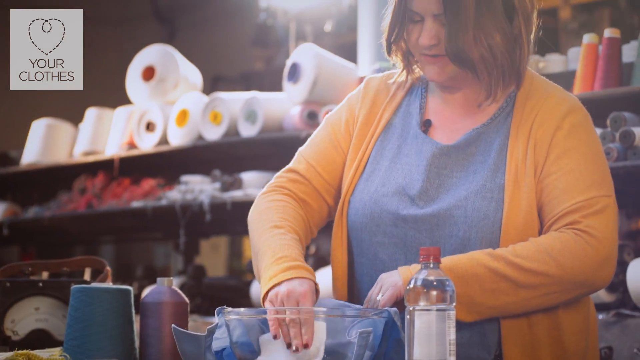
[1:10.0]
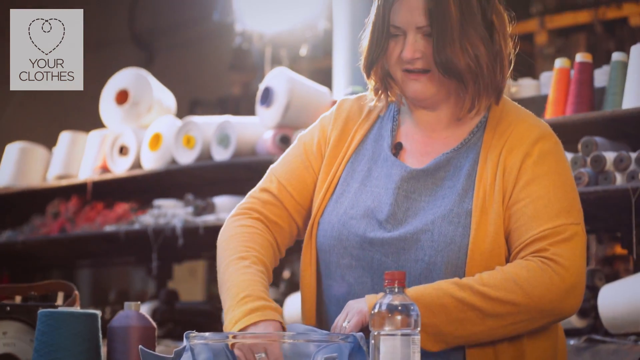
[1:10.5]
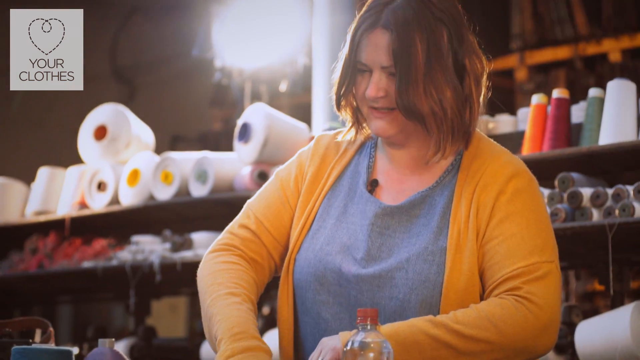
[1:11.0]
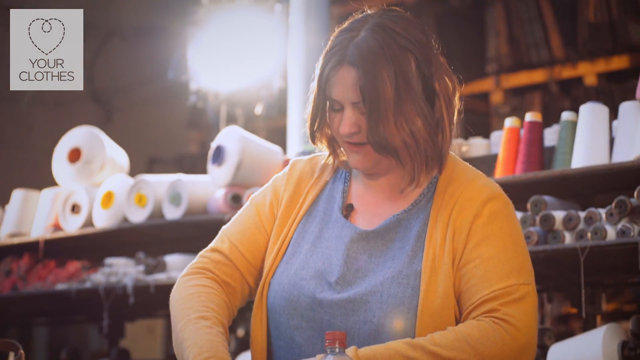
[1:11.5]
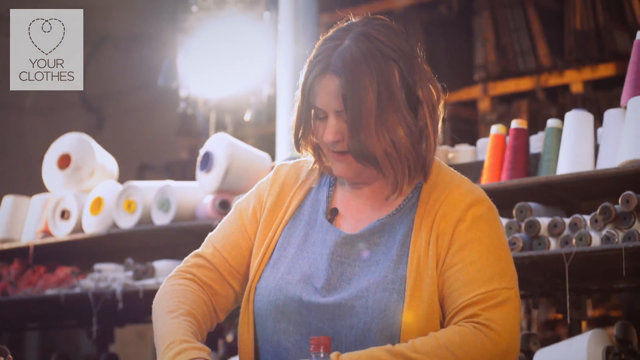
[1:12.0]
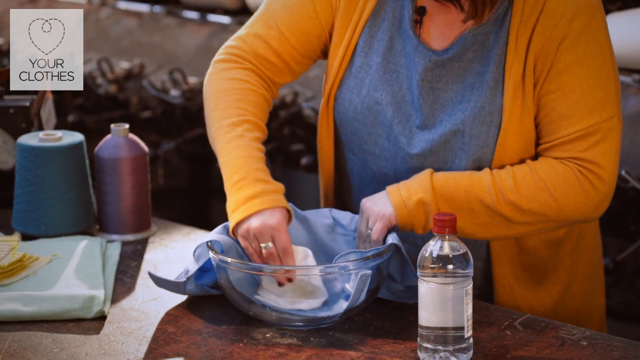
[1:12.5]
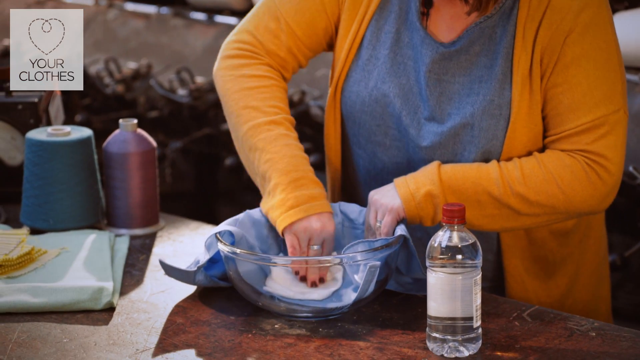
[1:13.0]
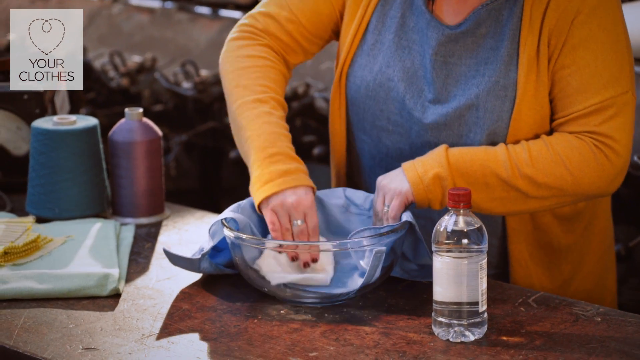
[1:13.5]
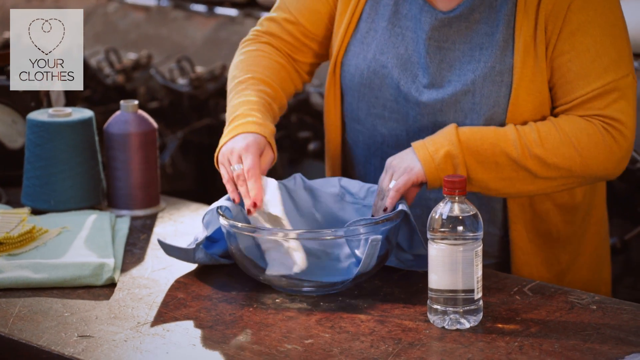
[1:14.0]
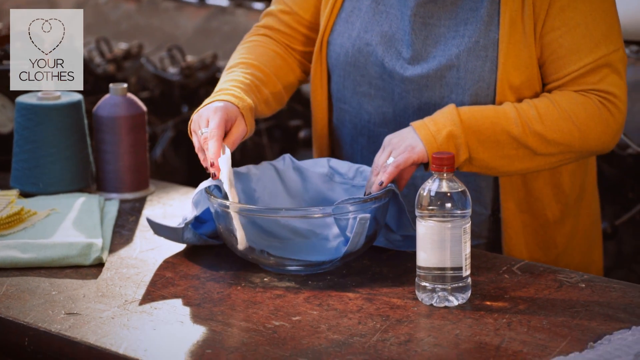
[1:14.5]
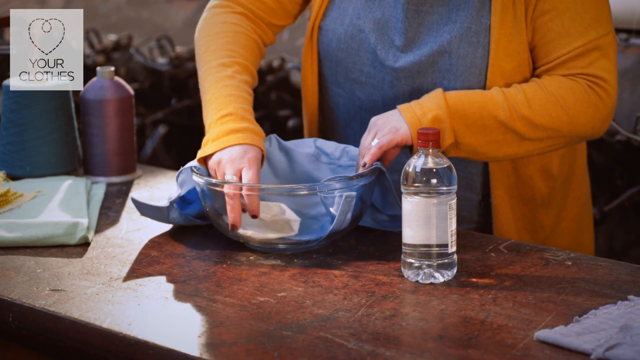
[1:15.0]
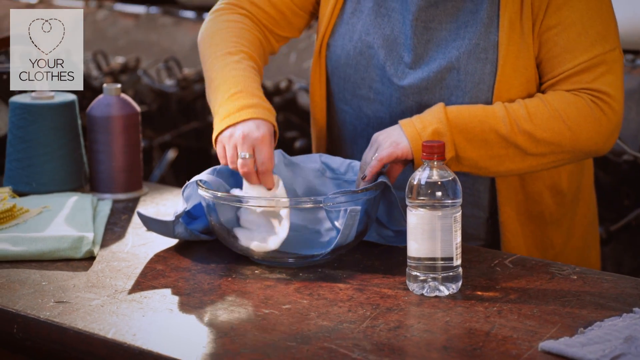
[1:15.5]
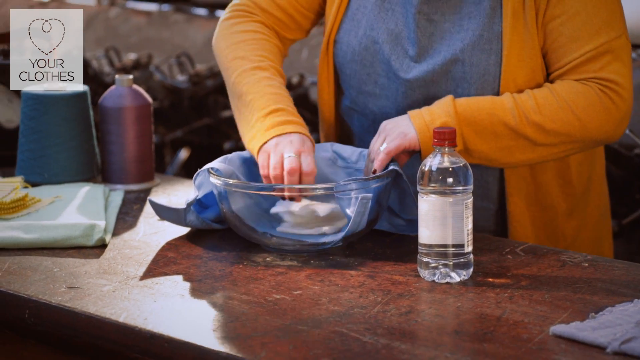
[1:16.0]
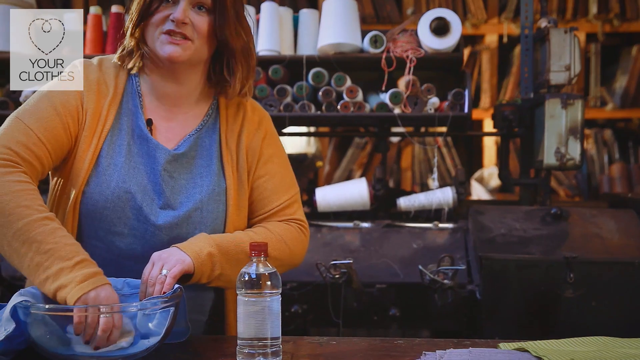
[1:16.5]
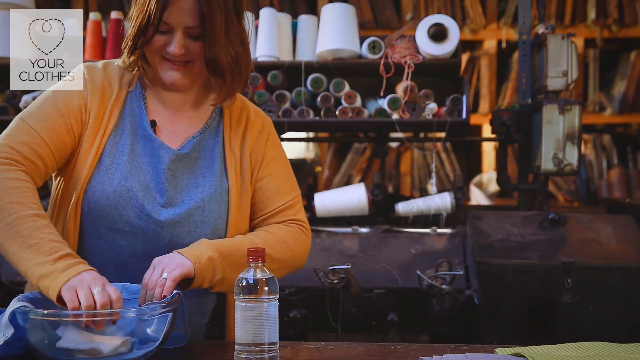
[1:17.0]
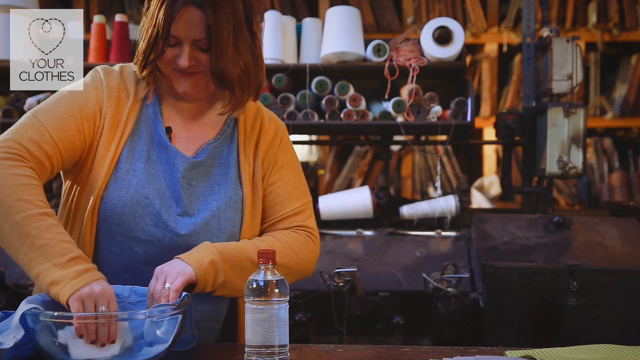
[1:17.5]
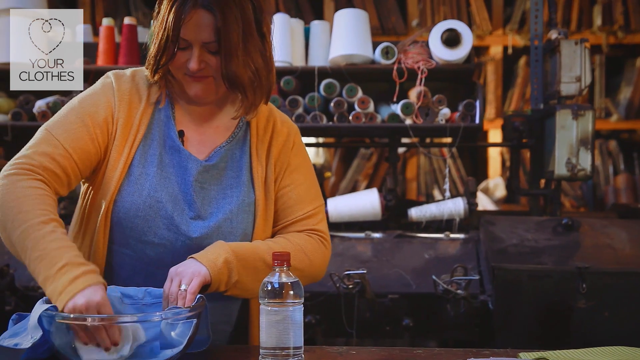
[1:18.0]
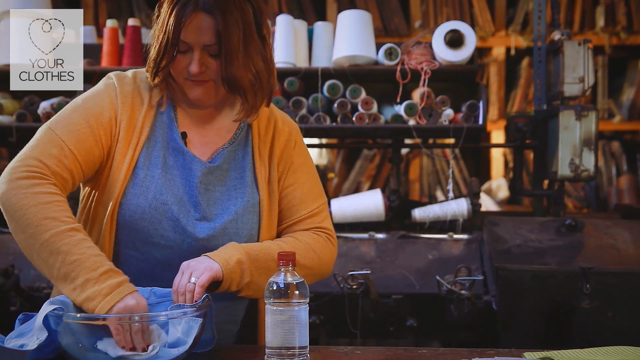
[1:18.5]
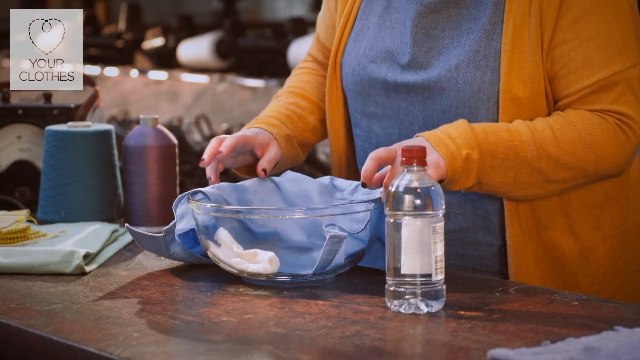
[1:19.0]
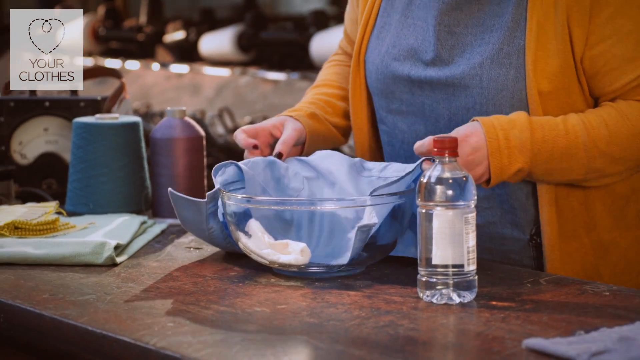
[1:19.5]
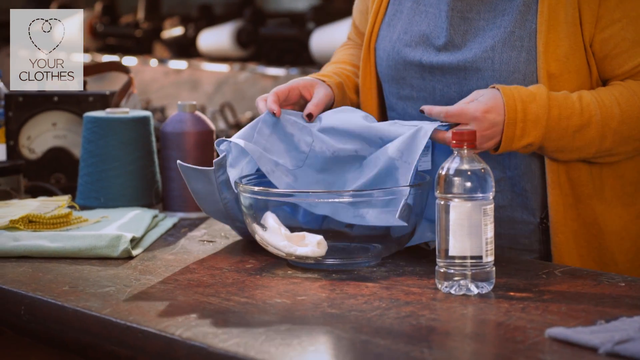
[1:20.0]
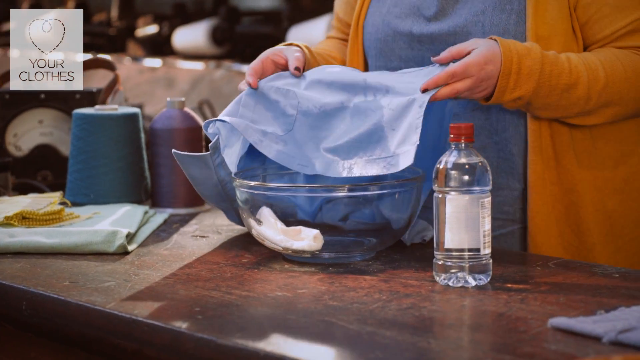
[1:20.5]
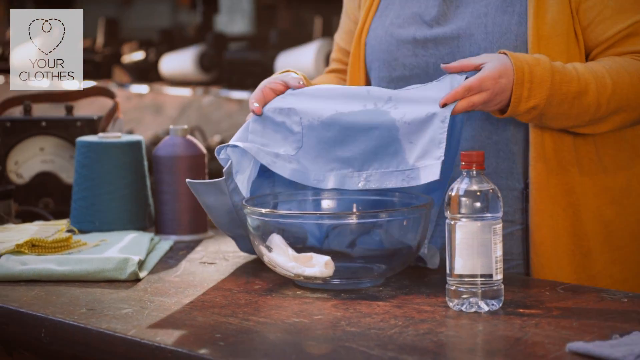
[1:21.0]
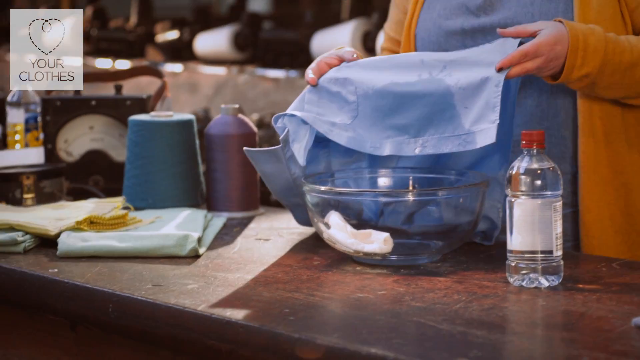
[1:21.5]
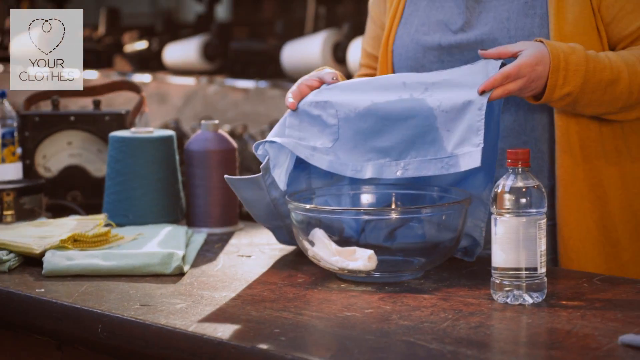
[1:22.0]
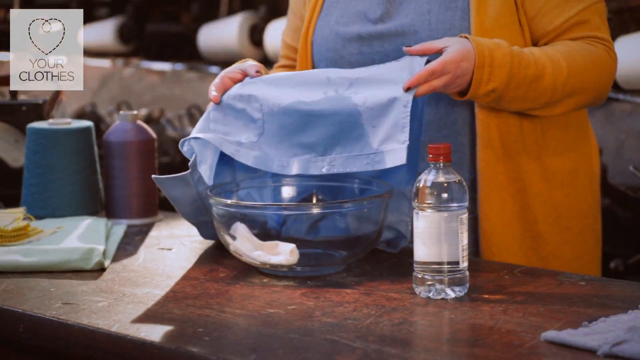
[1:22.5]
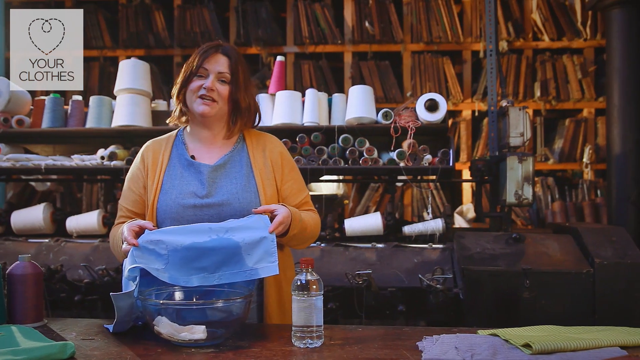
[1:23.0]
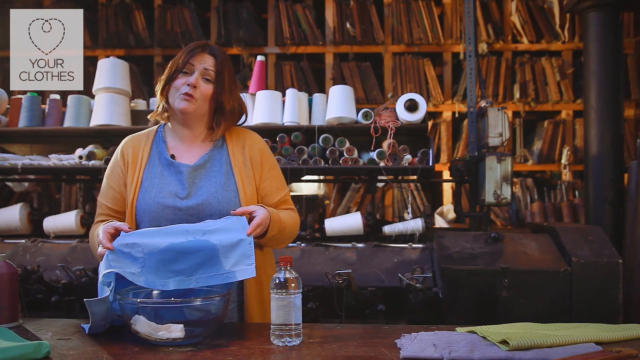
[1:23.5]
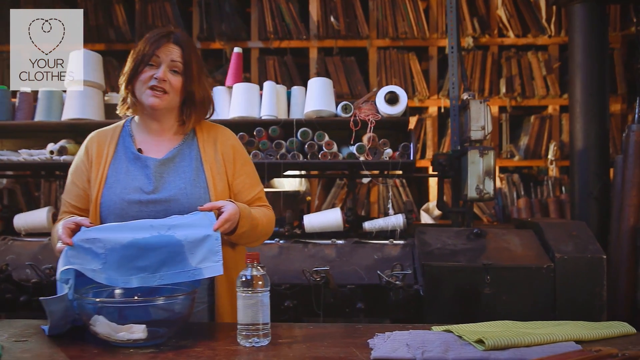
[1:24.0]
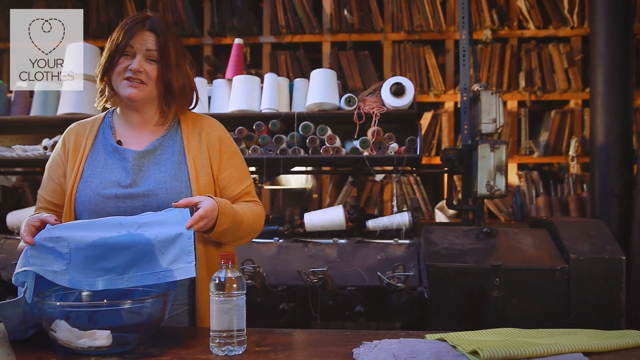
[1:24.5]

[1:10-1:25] A woman is cleaning a stain on a piece of clothing in a room that looks like a shop or work area in a textile shop, with various spools of thread and yarn in the background, along with material stacked and on shelving. In front of her is a wooden table with various pieces of cloth lying around. A blue dress-style shirt is in a bowl, covered in liquid, and she blots it with a white cloth or paper towel, trying to pull out the stain without spreading or scrubbing it. She speaks toward the camera while doing this. She then holds up the shirt, showing the area saturated by what is presumably the cleaning chemical that was added. Next to her on the table is a clear bottle of clear liquid with a red cap and no label.